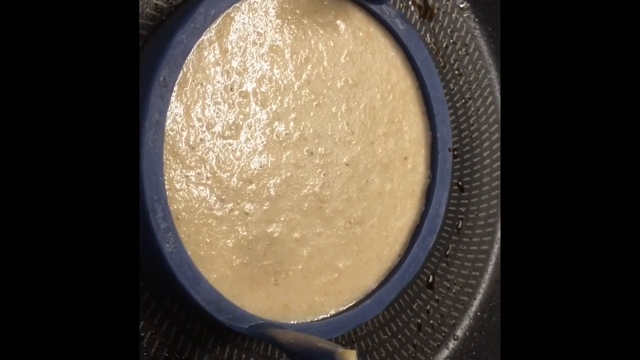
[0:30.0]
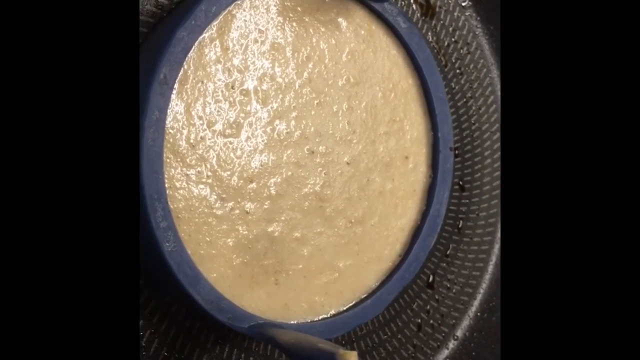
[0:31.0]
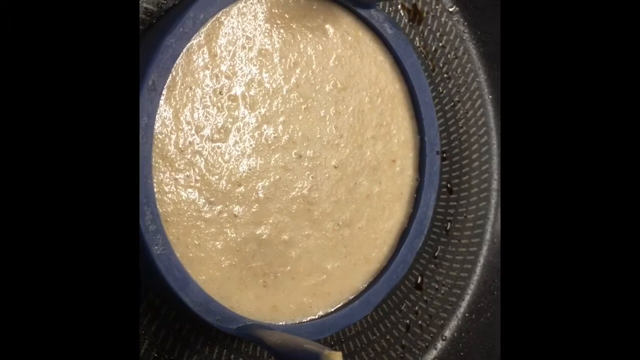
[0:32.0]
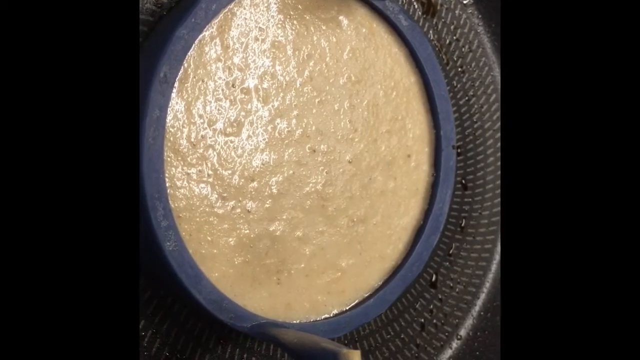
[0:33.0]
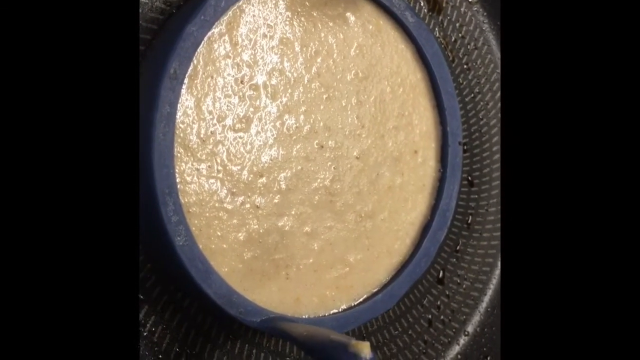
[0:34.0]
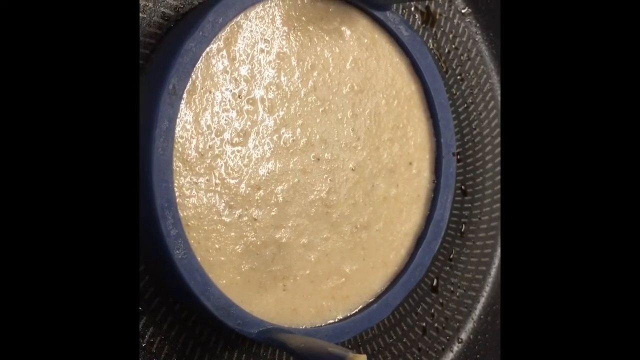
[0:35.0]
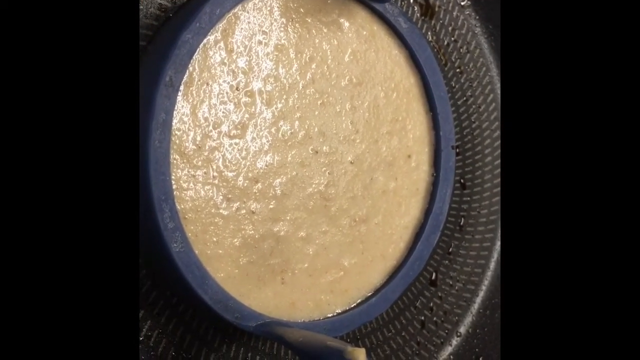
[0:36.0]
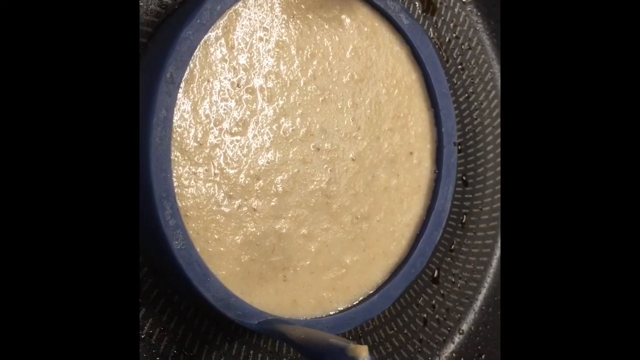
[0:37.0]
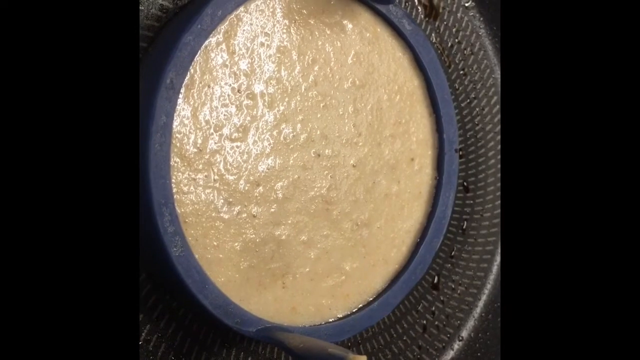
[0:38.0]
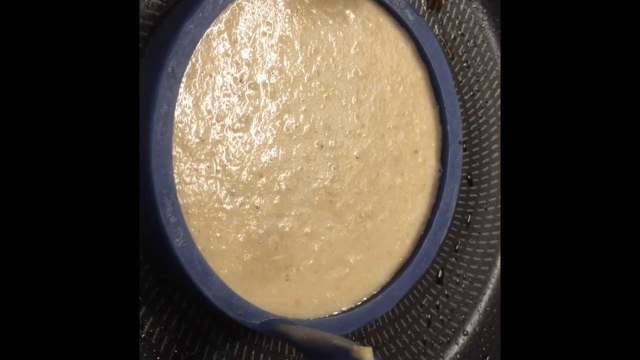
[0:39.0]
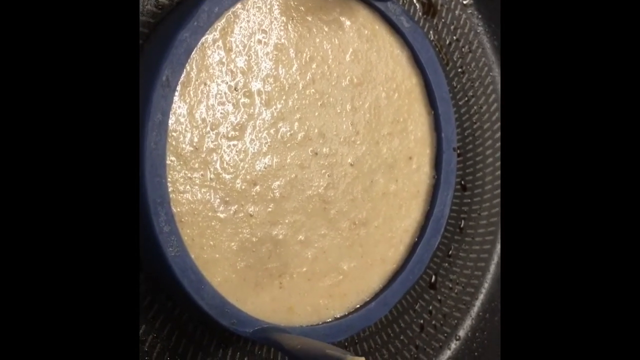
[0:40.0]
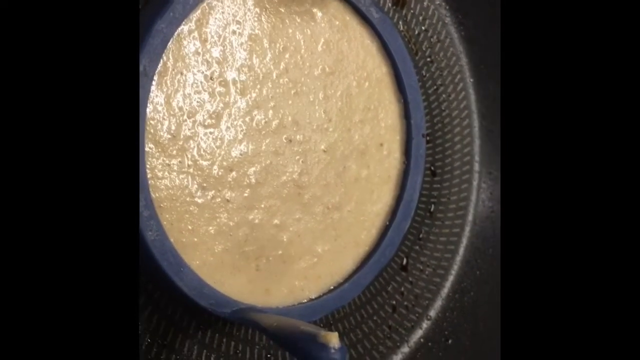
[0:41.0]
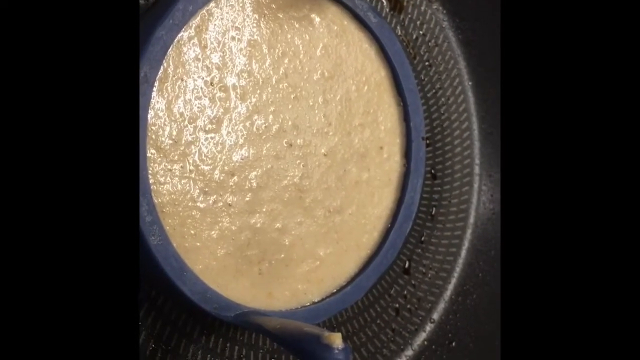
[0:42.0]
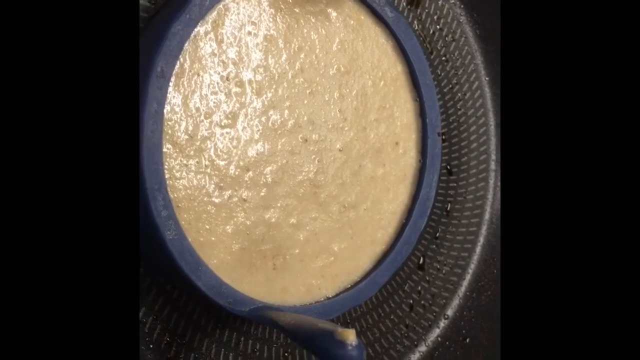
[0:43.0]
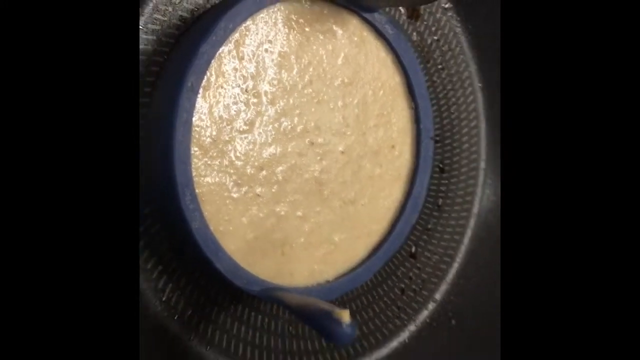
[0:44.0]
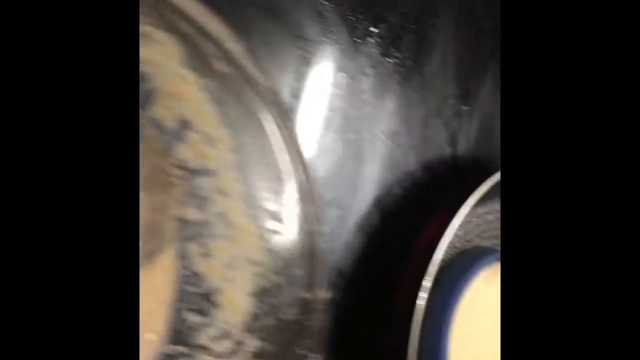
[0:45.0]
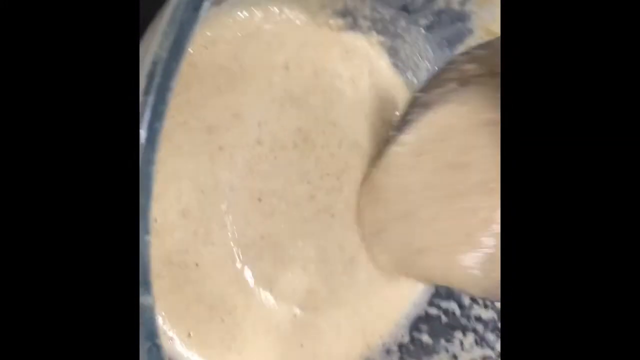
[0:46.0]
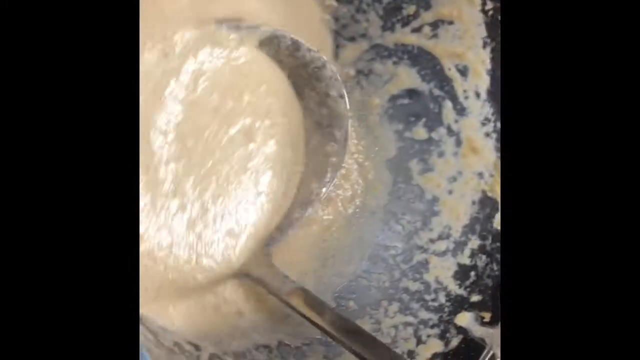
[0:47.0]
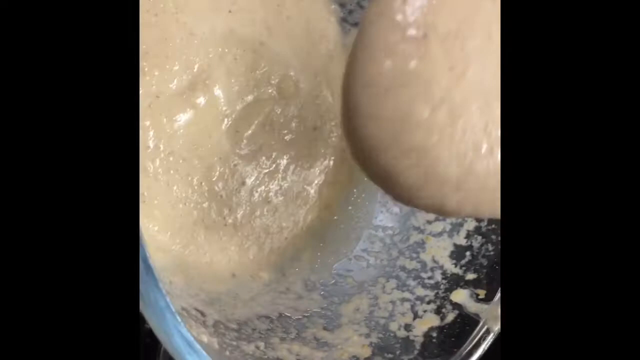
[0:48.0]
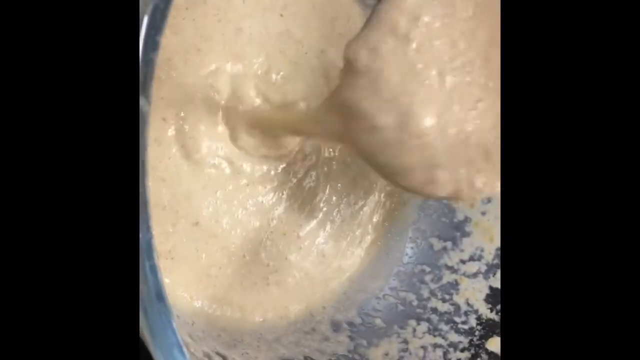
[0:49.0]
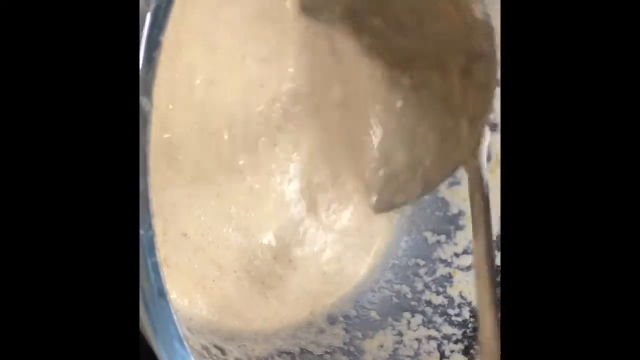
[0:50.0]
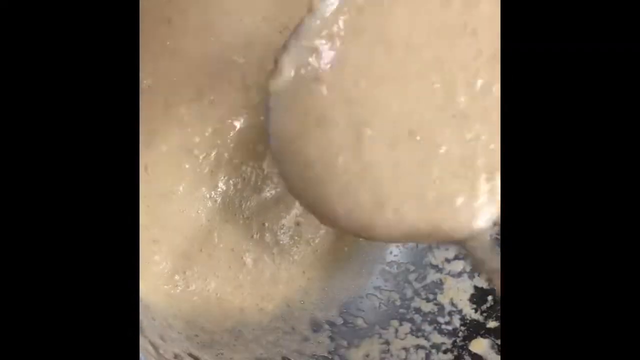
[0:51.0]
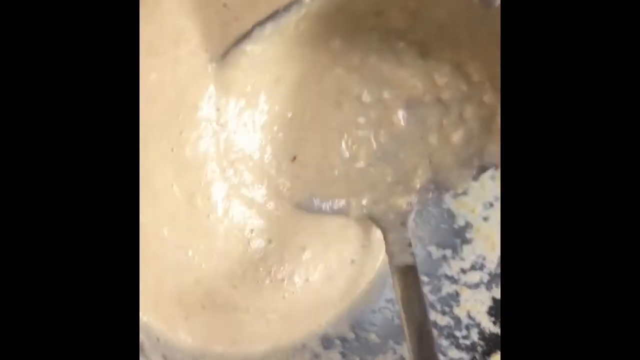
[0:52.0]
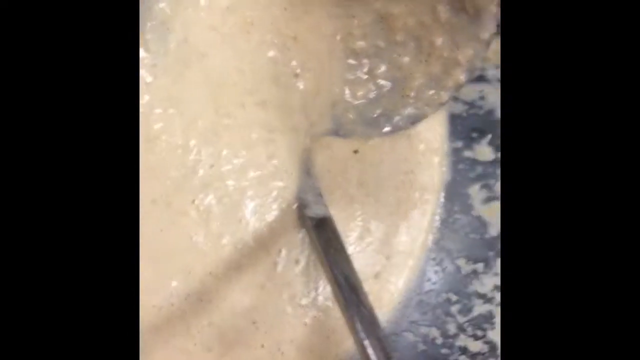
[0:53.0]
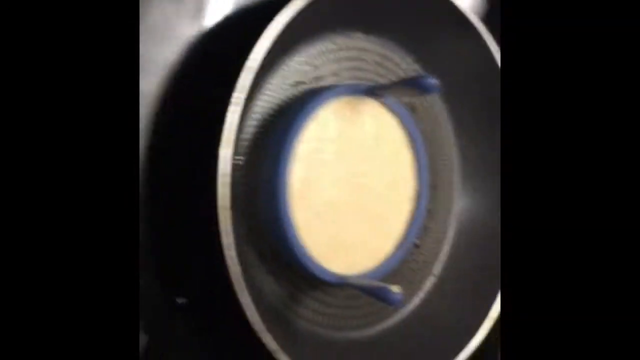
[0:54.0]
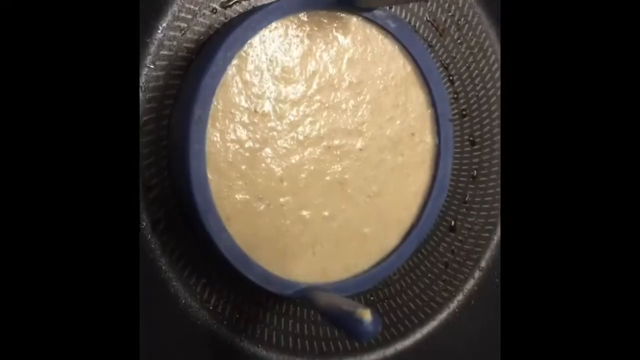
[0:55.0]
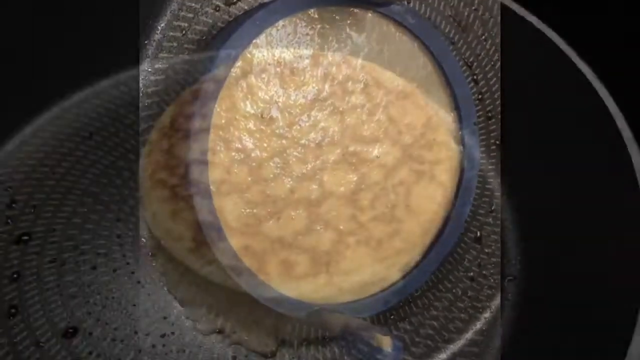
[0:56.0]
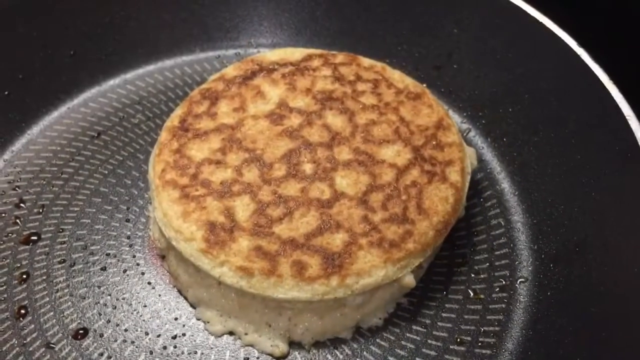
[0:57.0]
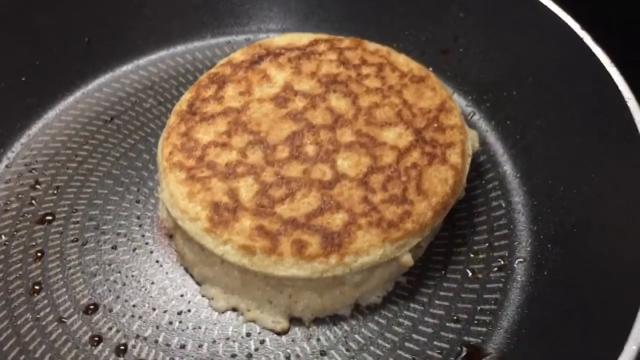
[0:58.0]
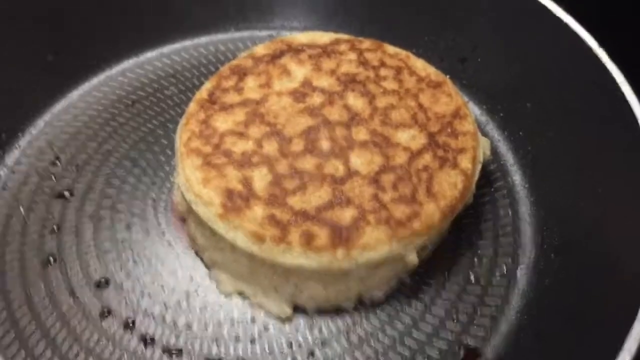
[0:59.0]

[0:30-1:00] A close-up shows the large round black pan with small white dashed lines on the bottom. In the pan, a large dark blue circular device holds light tan pancake batter. Its two side handles look kind of like long narrow knobs, worn at the ends where the blue color is fading off. The person appears to be standing near the pan, filming as they look down at the batter. The camera moves to the left, where a large clear bowl of tan liquid pancake batter is on a black table. A large silver ladle is in the bowl; the person scoops up a large ladleful of batter and pours it back into the bowl, then scoops up another big ladleful and pours it back. They set the ladle down in the bowl and bring the camera back to the right to the batter cooking in the black pan, zooming somewhat closer. After a transition, the black pan holds the cooked, round pancake. Its top is a light golden color with darker brown markings. The pancake looks about an inch tall, and on the left side some of the inner dough is kind of spilling out of the circular frame.